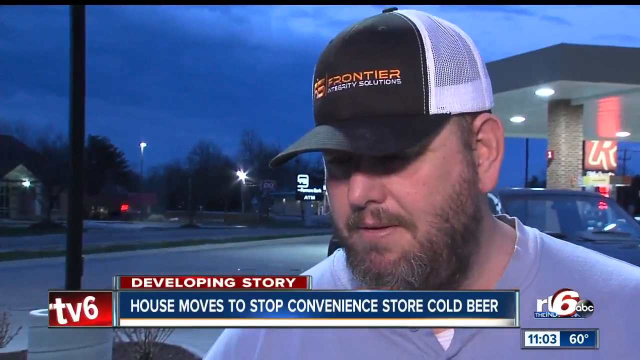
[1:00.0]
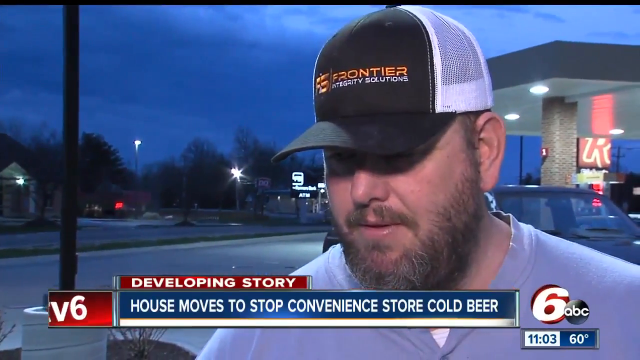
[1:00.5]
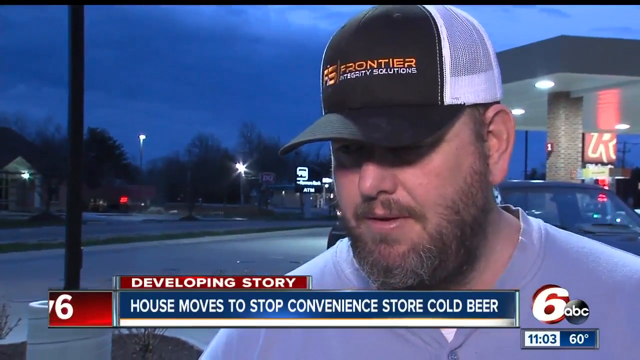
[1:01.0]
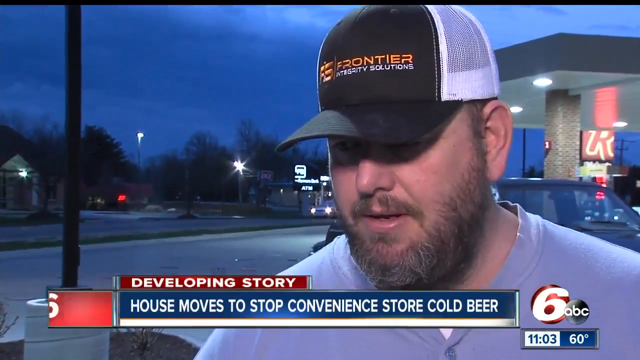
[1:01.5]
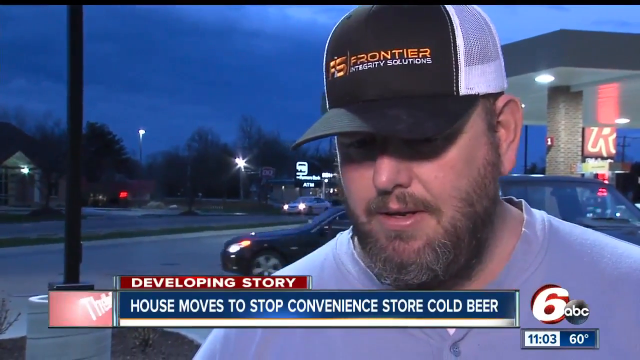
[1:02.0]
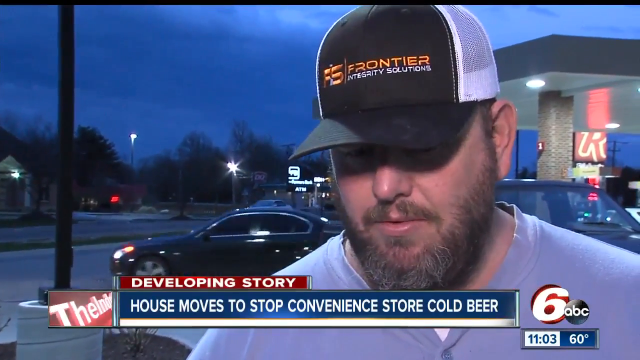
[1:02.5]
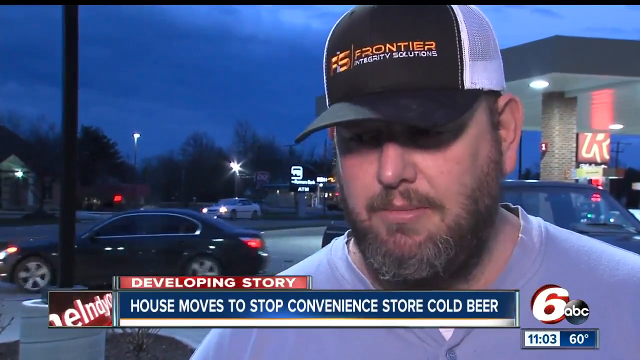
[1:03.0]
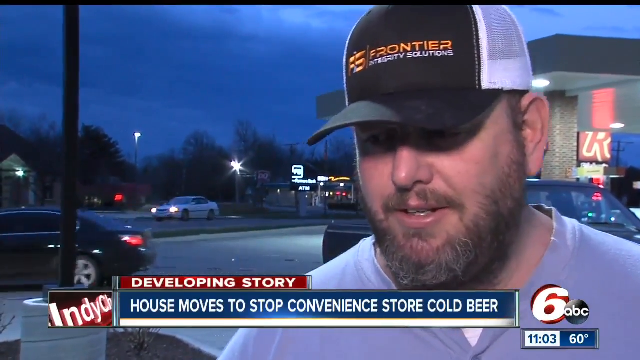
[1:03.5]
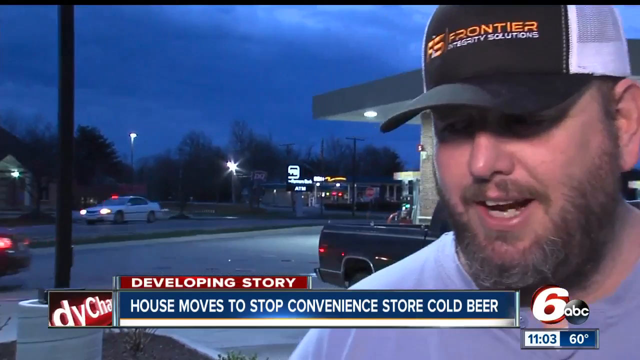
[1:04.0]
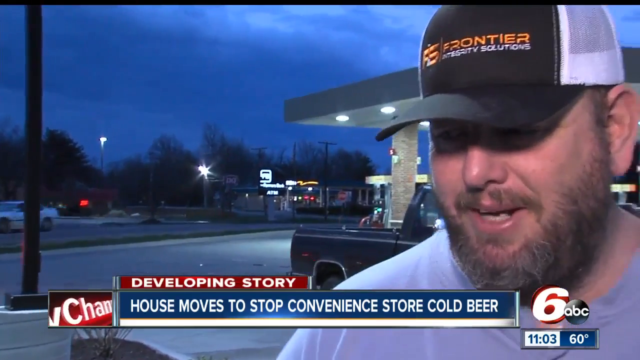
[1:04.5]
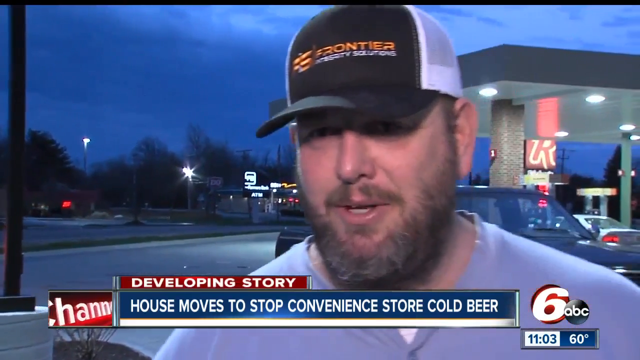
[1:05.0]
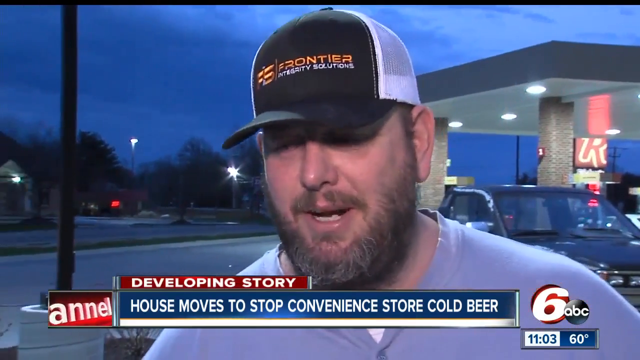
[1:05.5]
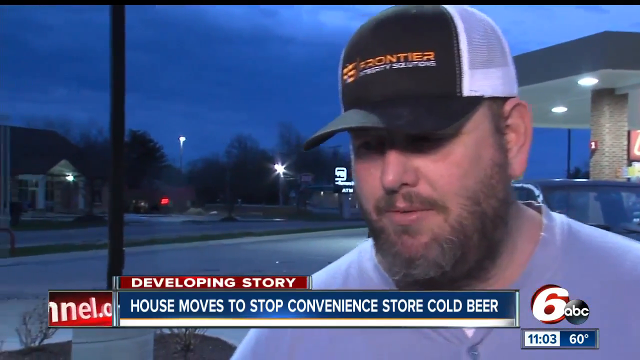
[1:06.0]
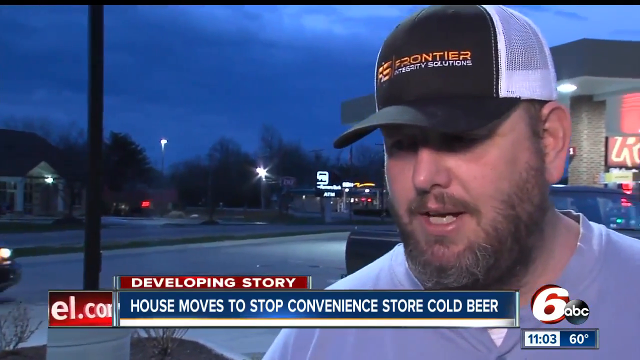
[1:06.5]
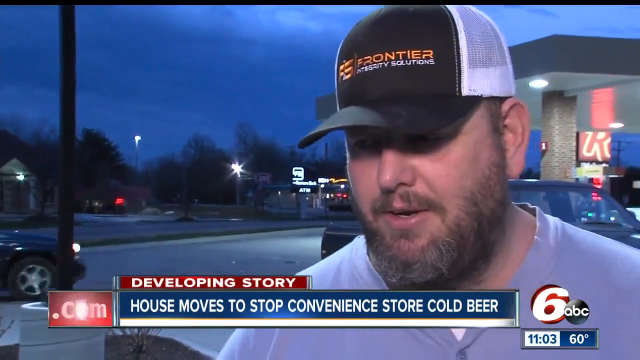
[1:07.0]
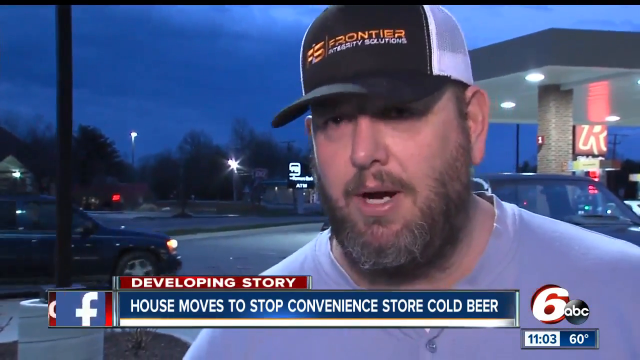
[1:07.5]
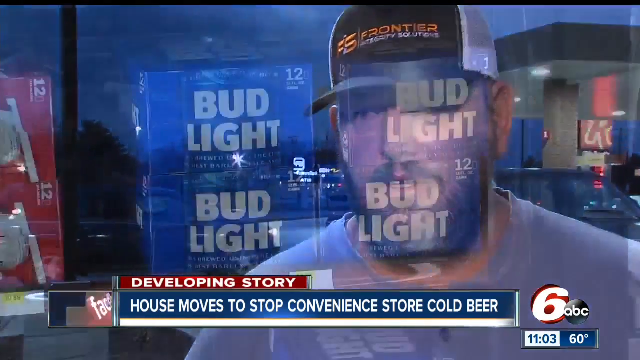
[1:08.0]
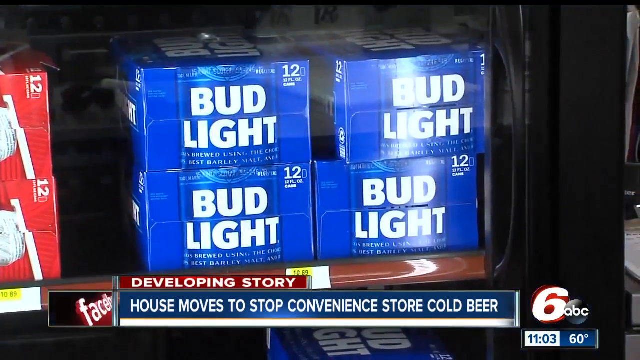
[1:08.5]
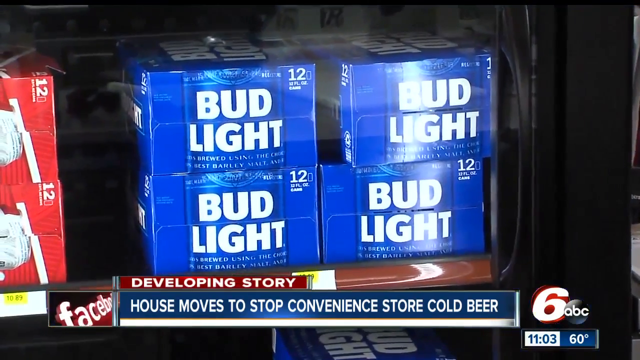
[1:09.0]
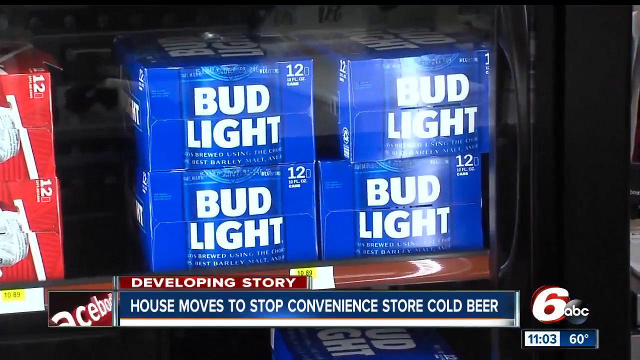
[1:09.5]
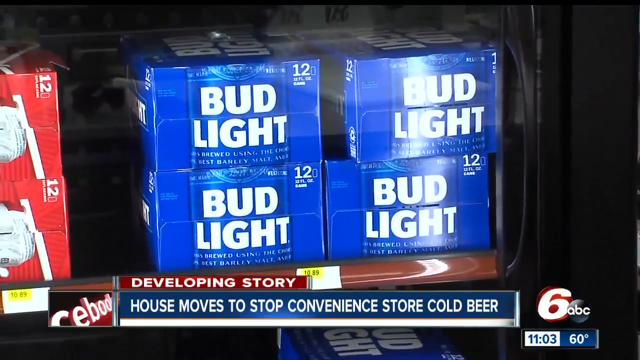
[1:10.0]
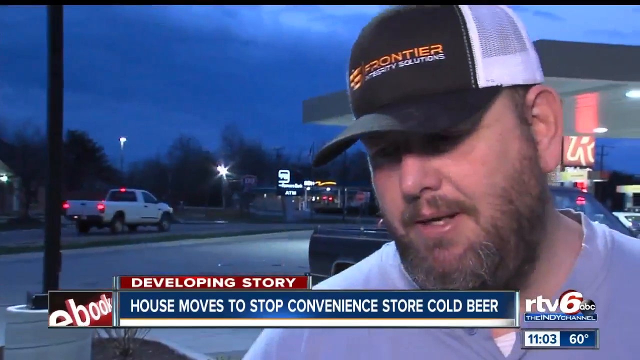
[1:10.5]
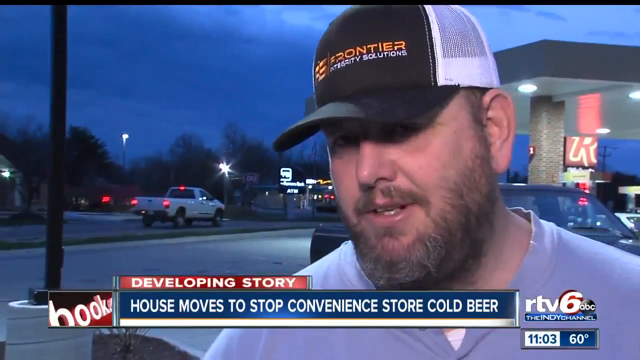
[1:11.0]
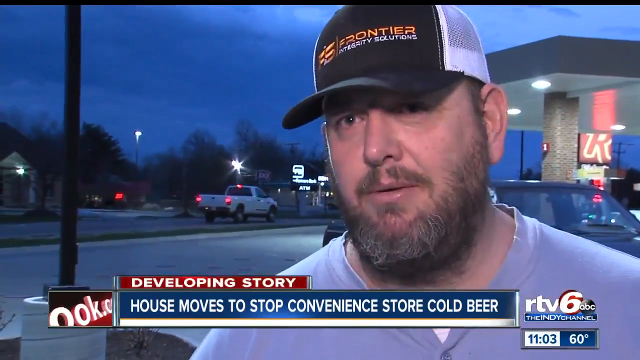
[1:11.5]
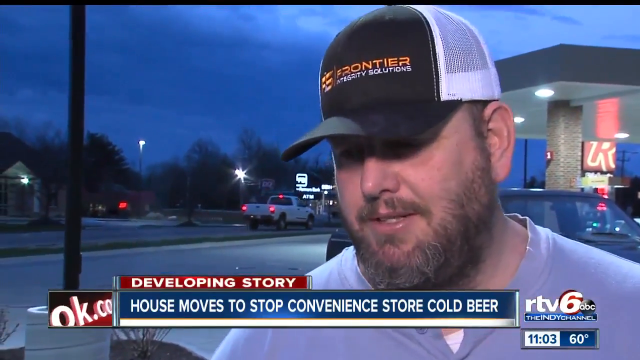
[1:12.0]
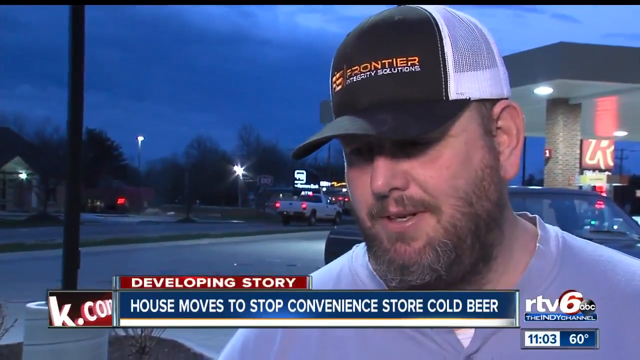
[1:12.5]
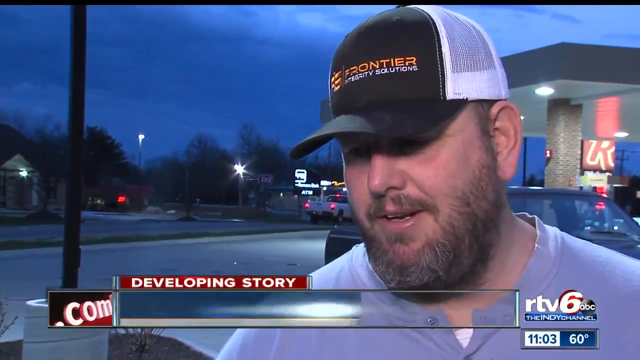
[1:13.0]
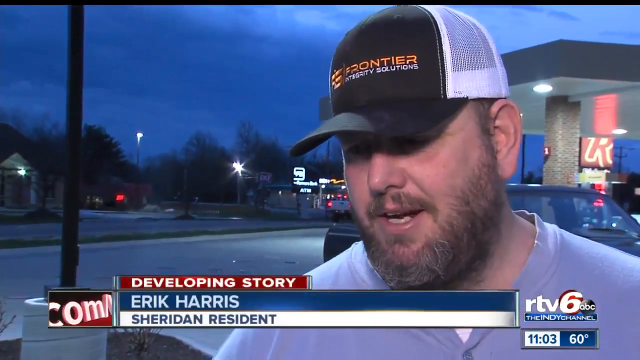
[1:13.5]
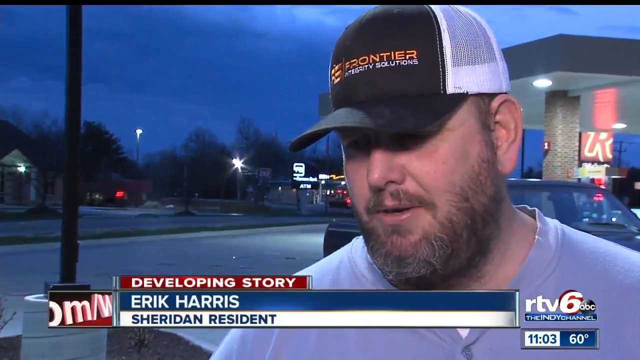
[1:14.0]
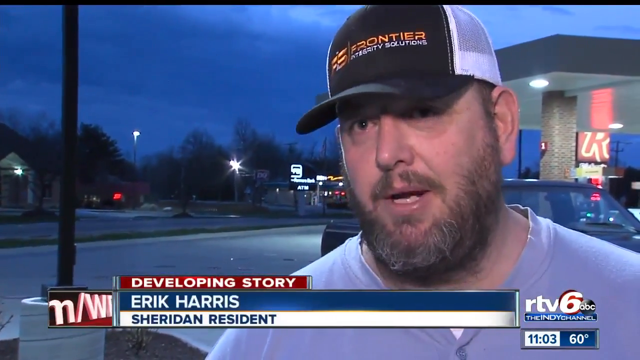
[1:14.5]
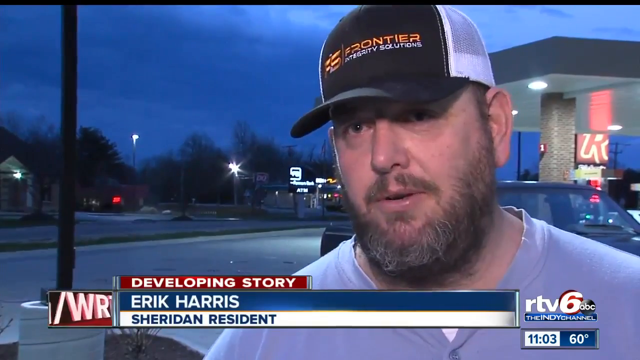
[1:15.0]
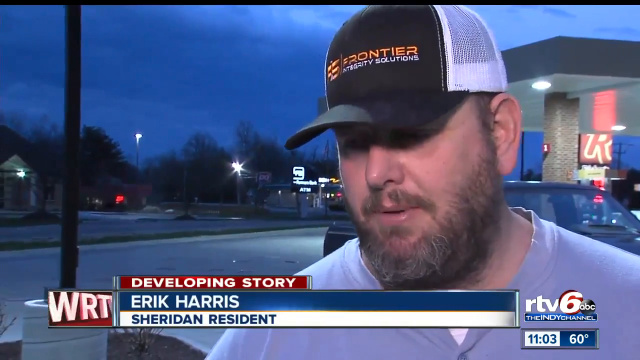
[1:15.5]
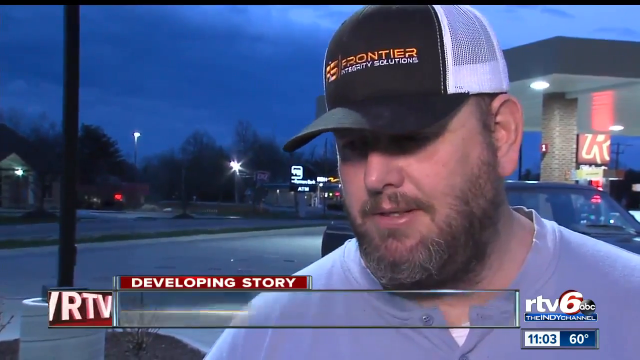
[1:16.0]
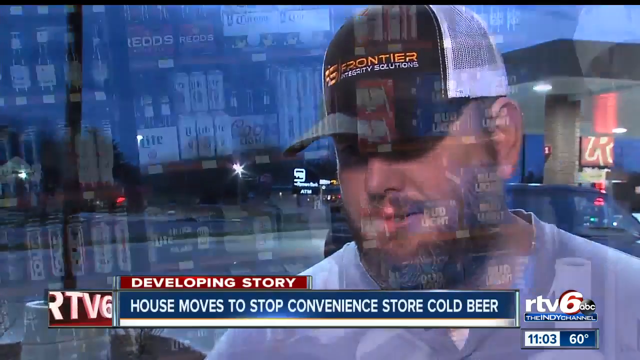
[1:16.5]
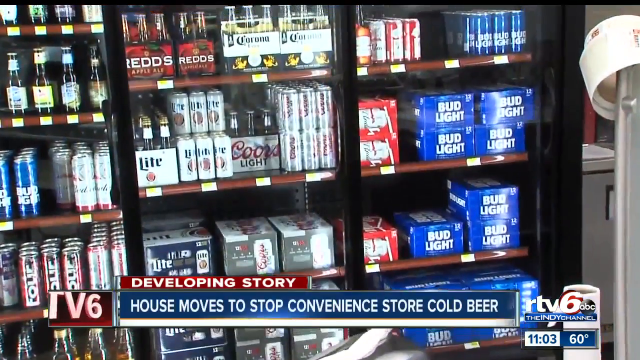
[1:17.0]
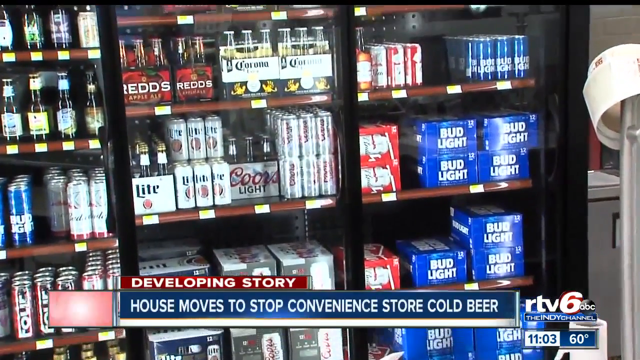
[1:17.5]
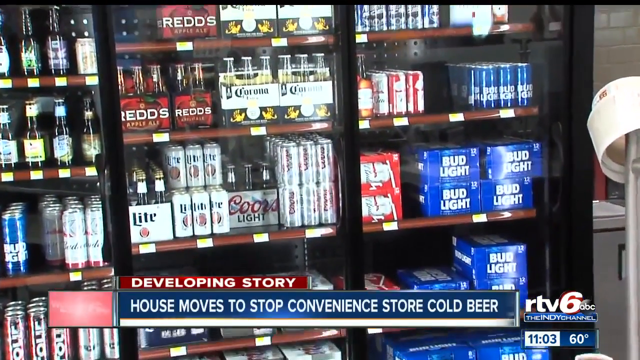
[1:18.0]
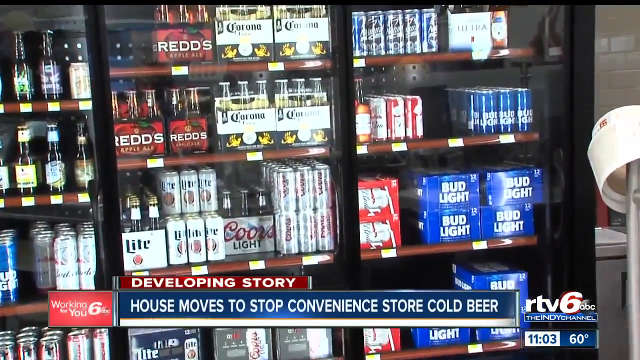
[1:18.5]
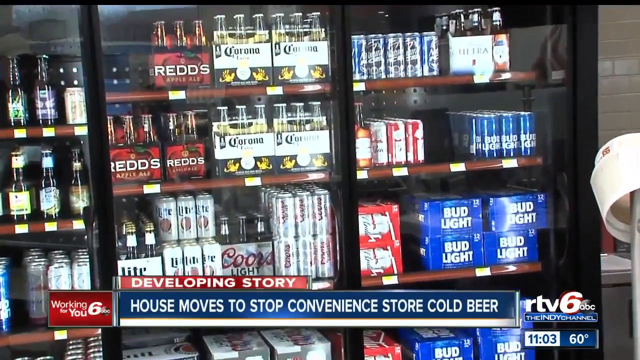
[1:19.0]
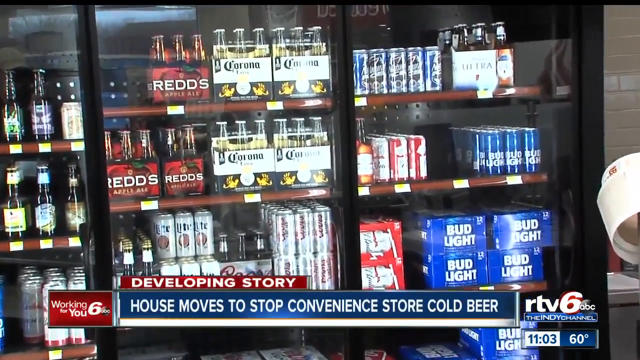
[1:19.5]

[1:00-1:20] A man is interviewed by a presenter. He wears a blue t-shirt and a black and white cap with writing on it, and his face is covered with a beard. A boxed 12-pack of Bud Light beer is shown. The man seems to be explaining the situation in the area, apparently about beer. On-screen text reads "developing story" and names Erick Harris as a resident. The man continues talking, seemingly explaining what is happening in the area.